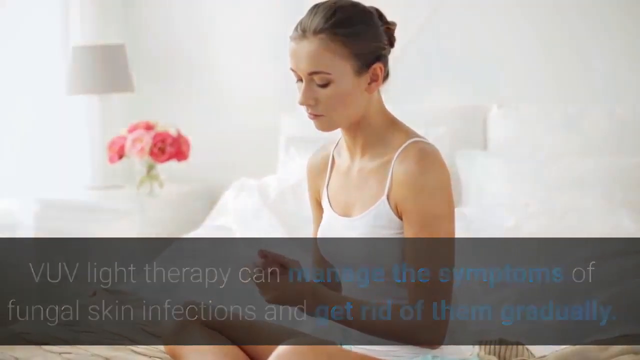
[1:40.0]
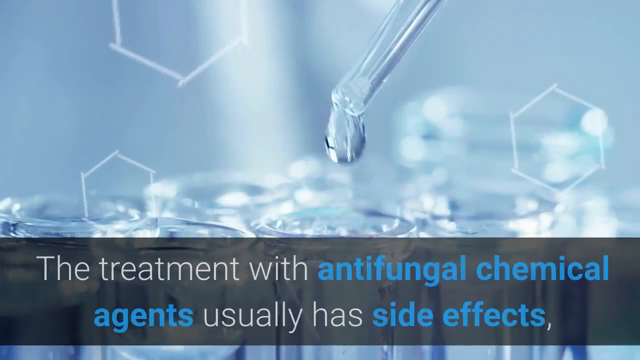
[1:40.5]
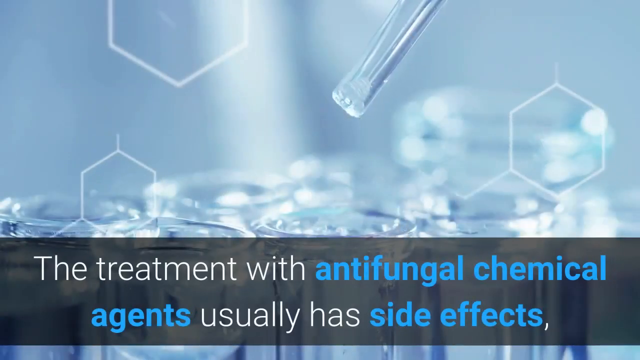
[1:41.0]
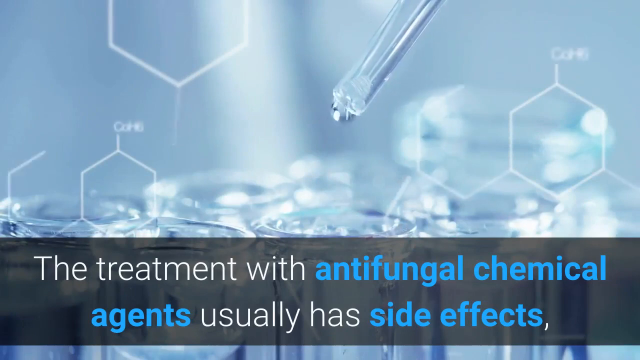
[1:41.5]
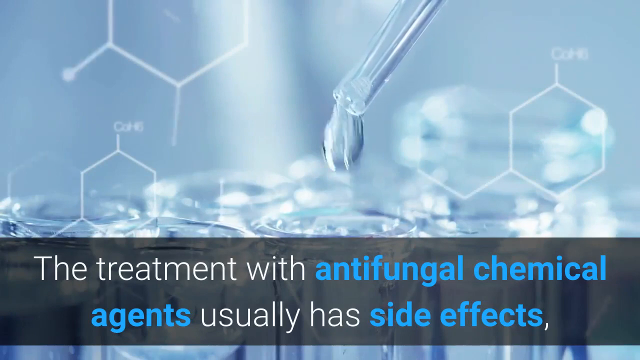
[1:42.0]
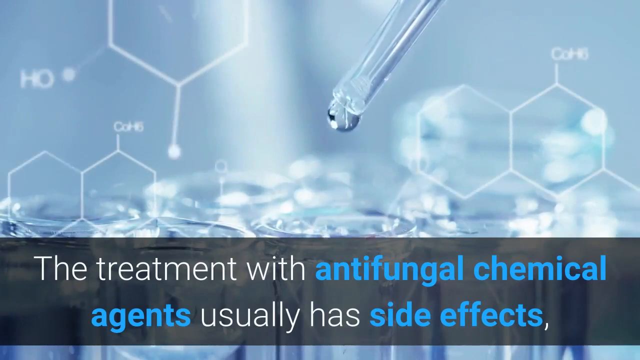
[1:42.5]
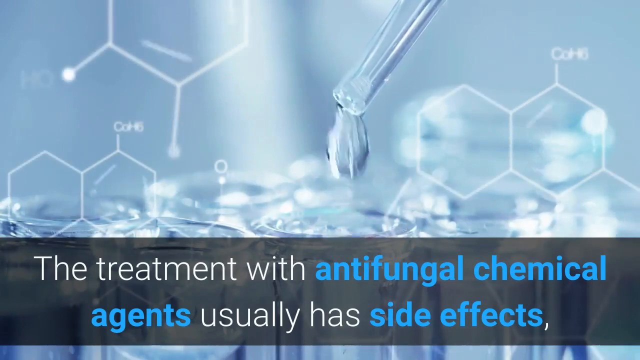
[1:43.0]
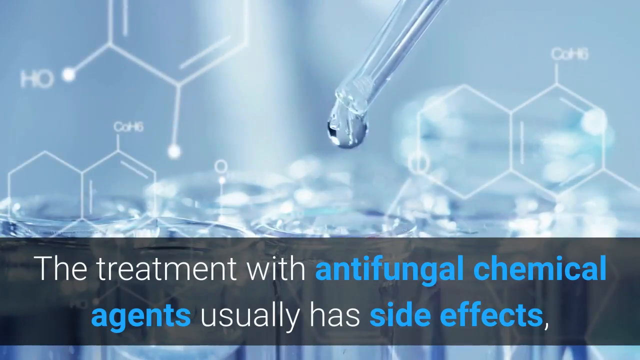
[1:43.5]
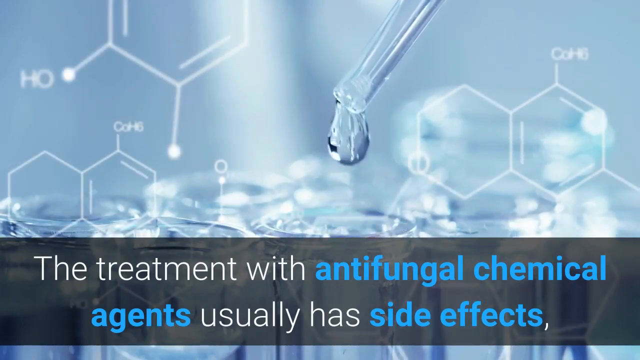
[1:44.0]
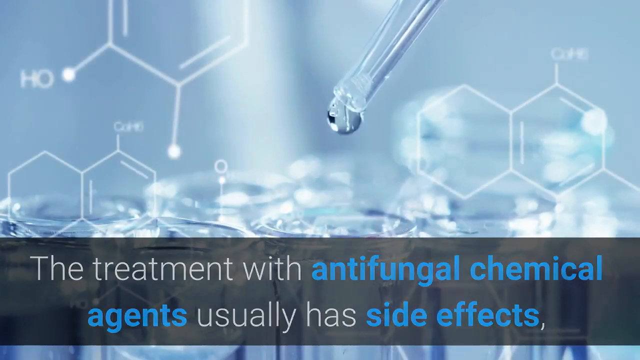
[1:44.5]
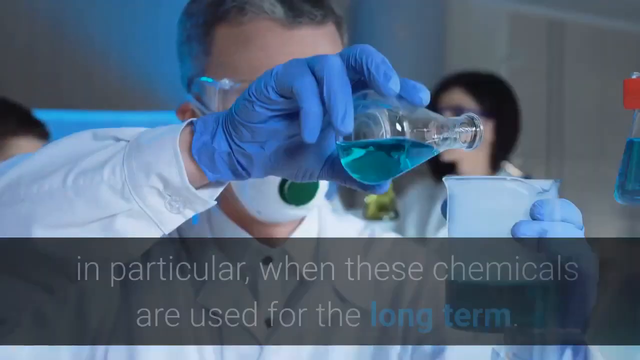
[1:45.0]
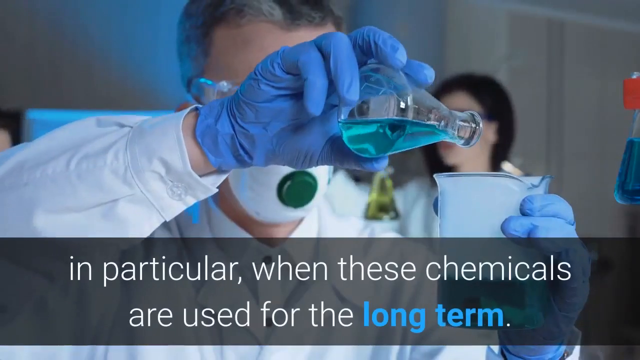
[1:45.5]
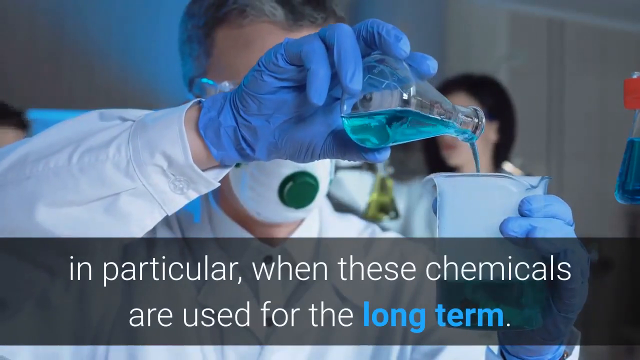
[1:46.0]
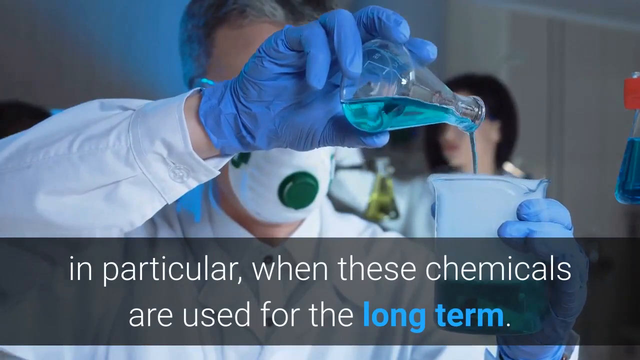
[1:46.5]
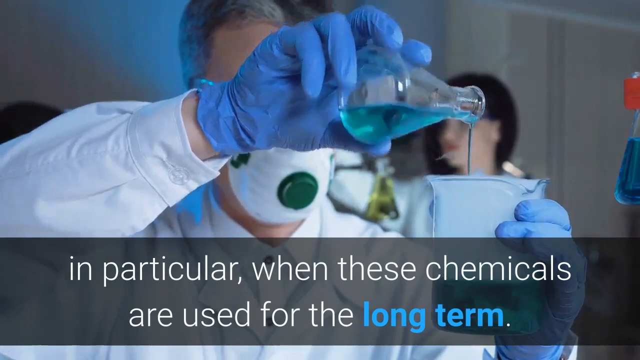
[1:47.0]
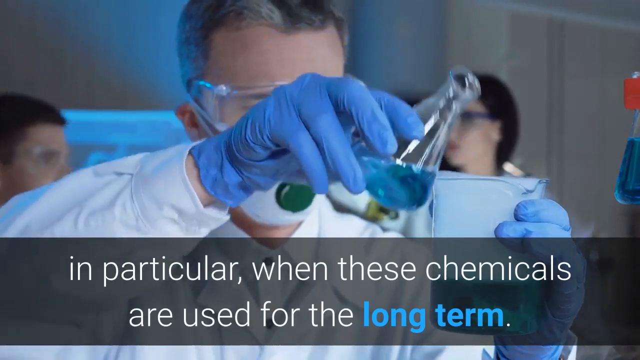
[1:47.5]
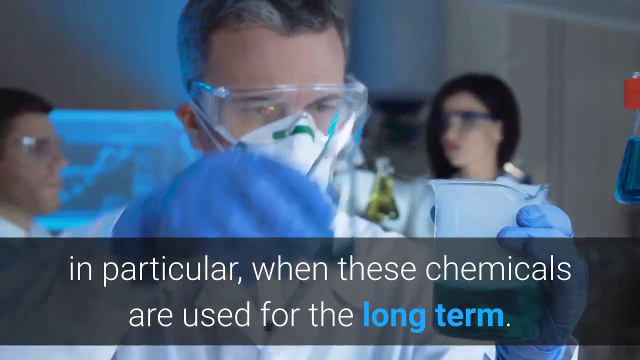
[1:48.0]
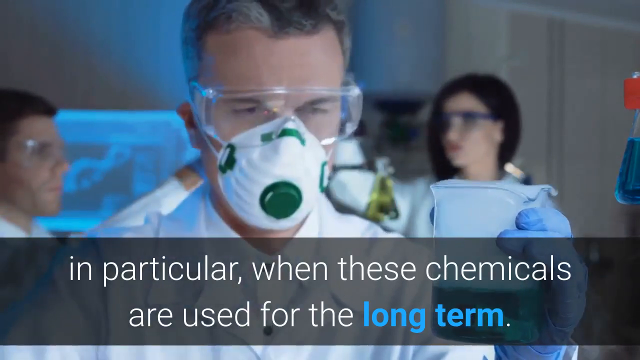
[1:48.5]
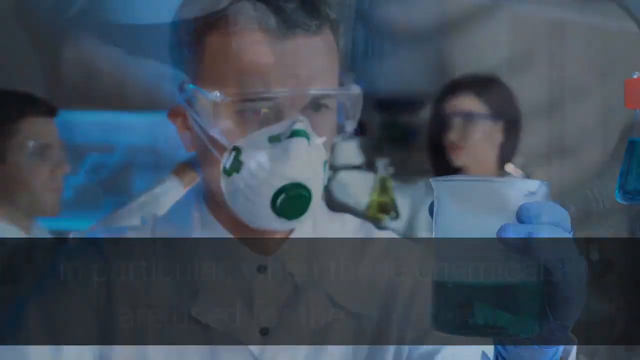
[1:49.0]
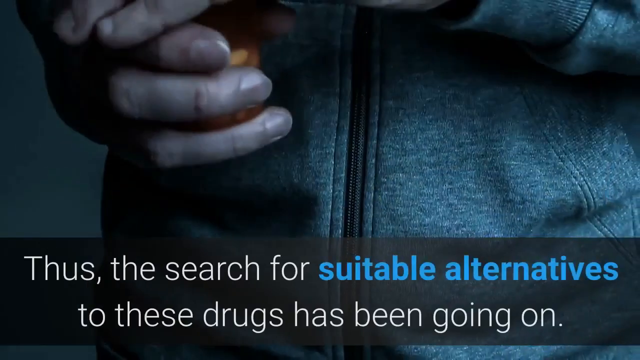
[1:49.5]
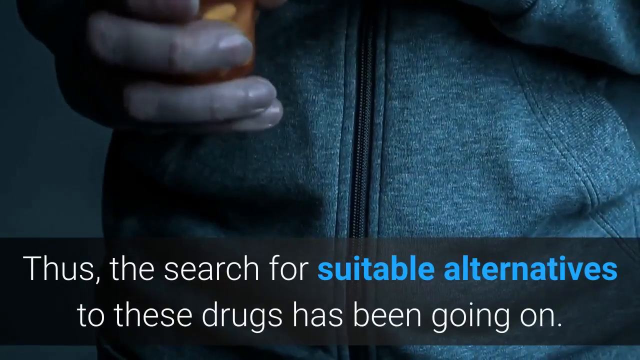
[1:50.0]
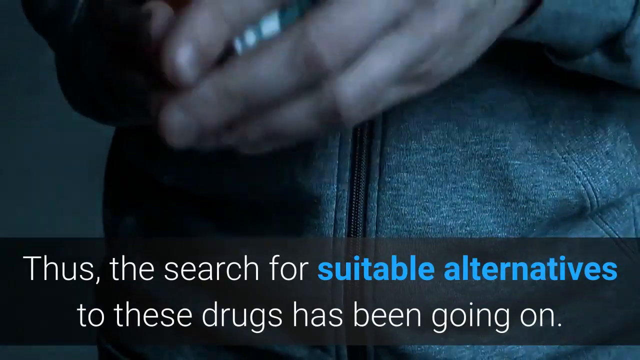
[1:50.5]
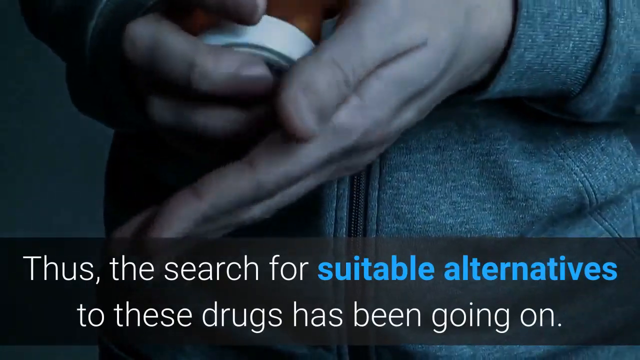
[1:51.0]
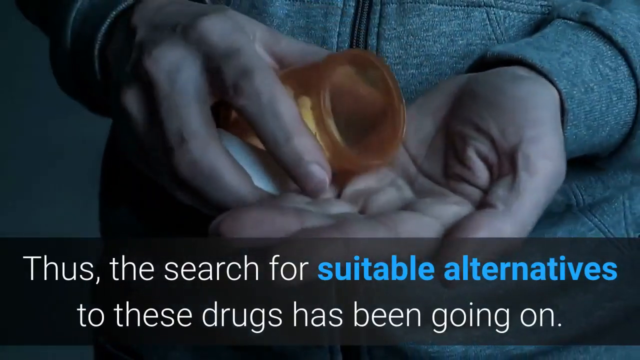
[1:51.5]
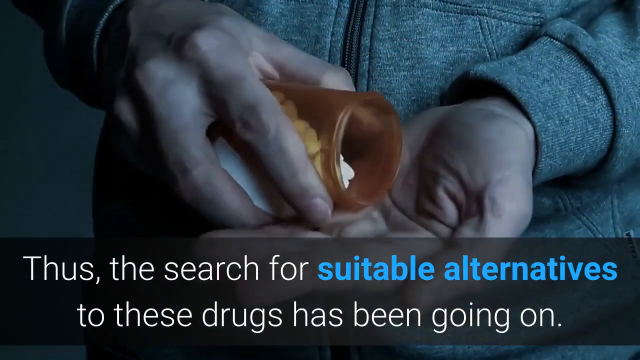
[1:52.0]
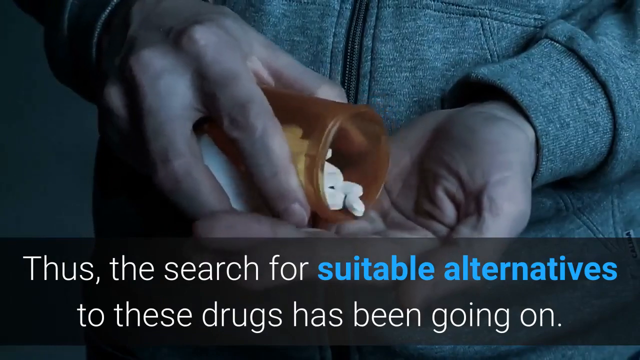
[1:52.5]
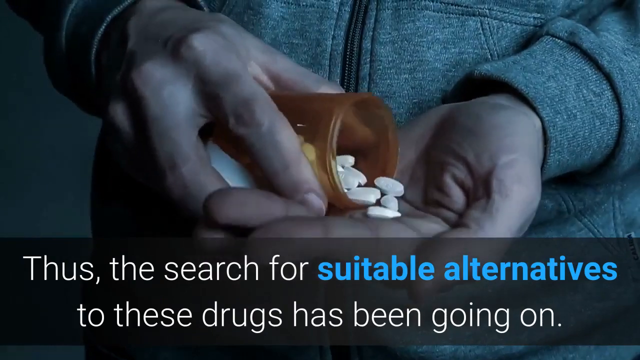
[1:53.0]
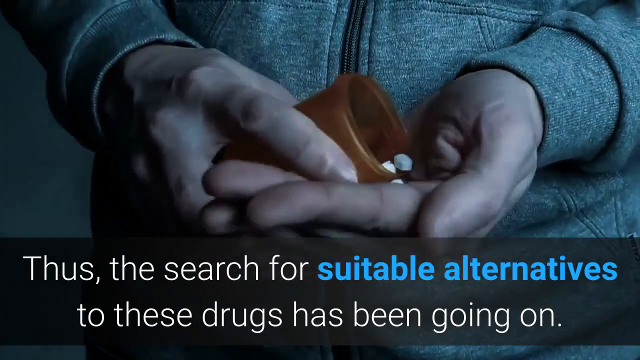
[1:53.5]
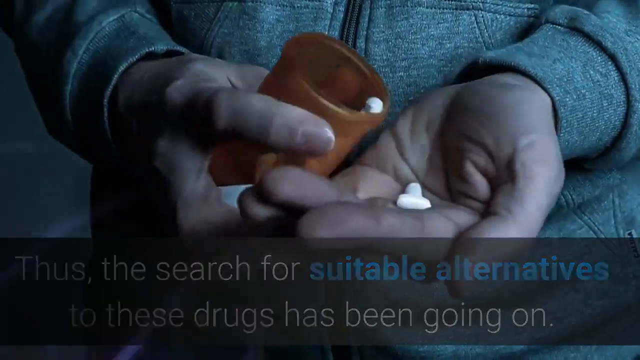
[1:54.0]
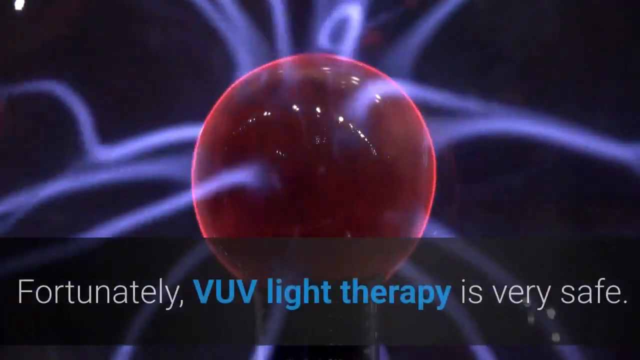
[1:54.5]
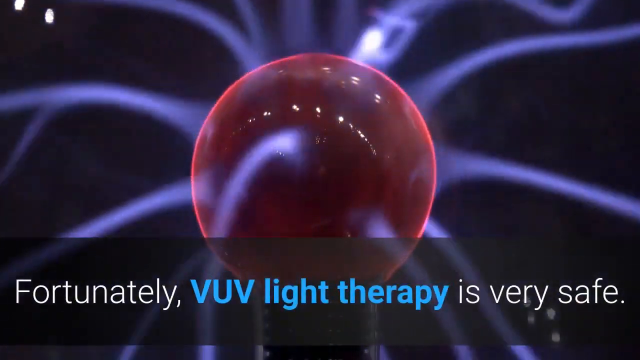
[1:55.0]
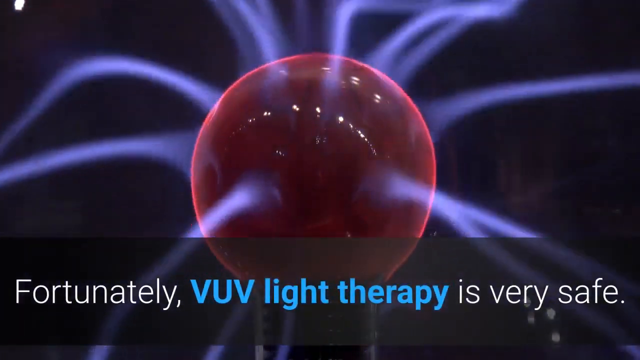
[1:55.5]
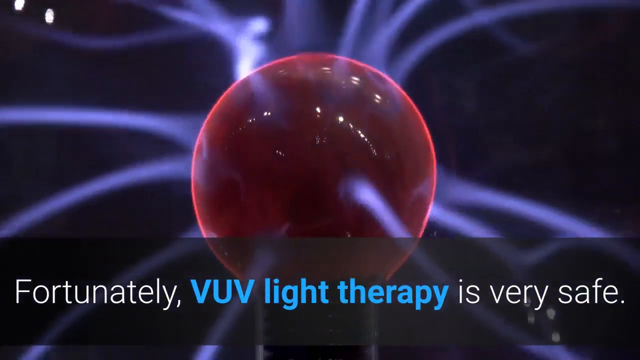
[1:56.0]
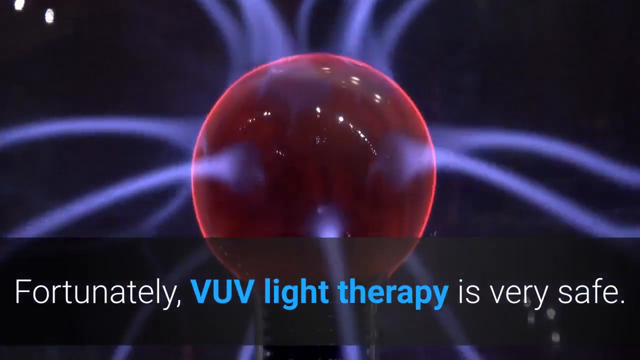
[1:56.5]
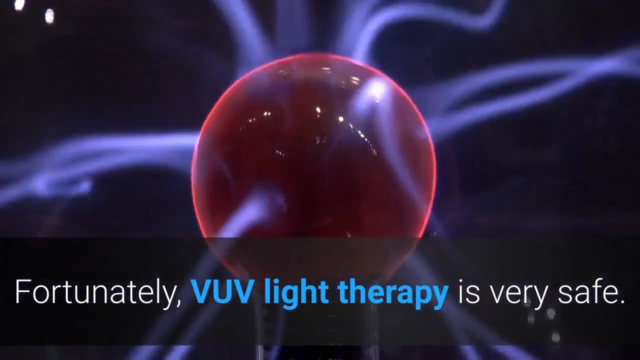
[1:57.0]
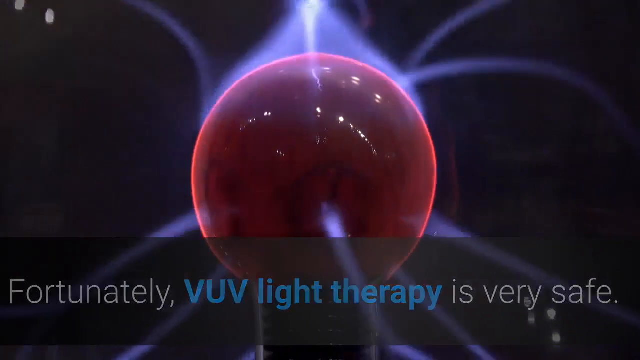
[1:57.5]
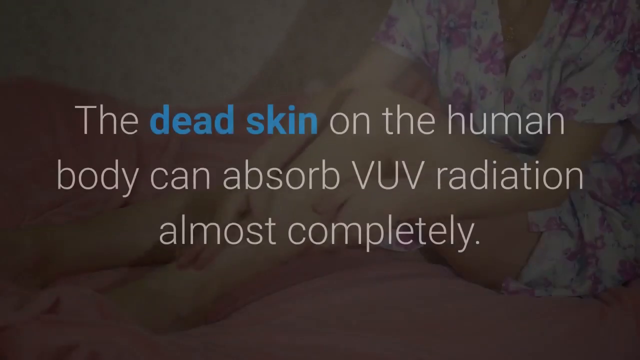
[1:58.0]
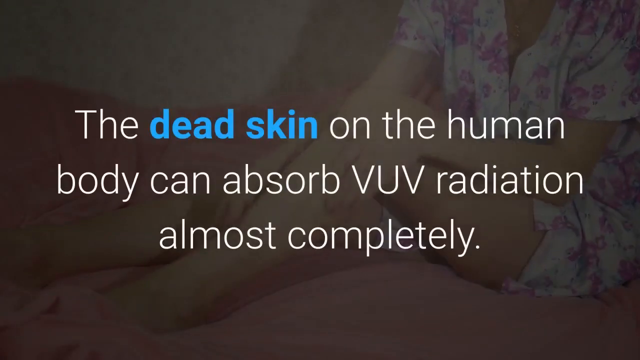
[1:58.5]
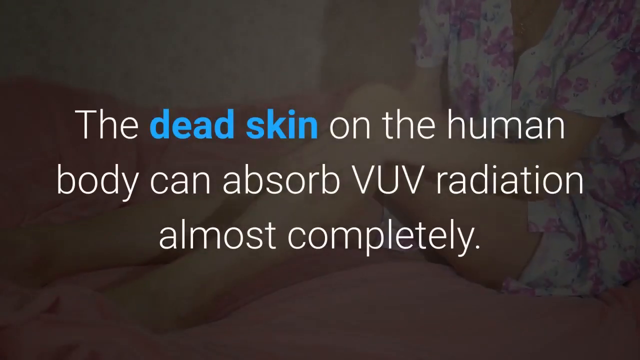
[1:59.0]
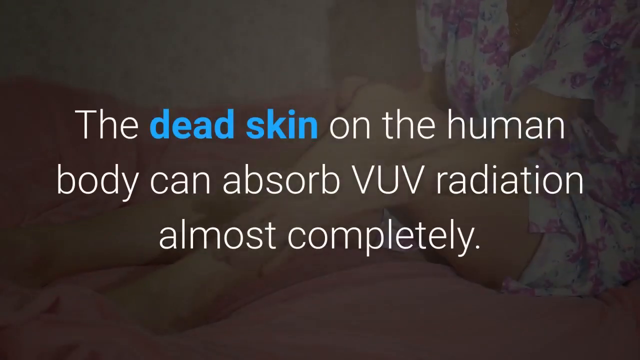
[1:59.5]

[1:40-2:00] The woman sits on the white bed in the white room, her brown hair up in a bun, looking down toward her hands, which she rubs together. A new screen shows a dropper coming from the top of the screen, slightly right of center, releasing a clear liquid that drips onto a surface that looks kind of like glass vials. Three six-sided shapes are around it, and the text at the bottom reads "the treatment with antifungal chemical agents usually has side effects." Molecules appear with letters: "HO" in the upper left corner, "COH5" under that, one labeled simply "O", and one labeled "COH5" at the far right in the upper right corner. Next, a person wearing blue gloves holds a beaker of clear blue fluid in the right hand and a measuring cup in the left gloved hand, pouring the blue liquid into the cup. Behind them is a woman with long dark hair, but the background is blurred. The person pouring has short graying hair and Caucasian skin and wears a long-sleeve button-down collared shirt and a medical respirator mask. The text underneath says "in particular, when these chemicals are used for the long-term", with "long-term" in blue and the rest in white. The man pours half of the liquid in, sets the beaker upright, moves it down out of the frame, and looks at the measuring cup of blue liquid. The screen changes to the waist of a person wearing a zippered hoodie that is gray with white speckles, apparently heathered gray, against a lighter gray background. In their right hand they hold an open orange, clear prescription bottle with white oval or oblong pills, with the cap next to the bottle in the same hand. They pour pills into the palm of their open left hand, accidentally putting three in, then use the bottle to scoop up the third pill, leaving two in the hand. The text underneath says "thus the search for suitable alternatives to these drugs has been going on", with "suitable alternatives" in blue and the rest in white. A new screen then shows a big red globe in the center with bluish streaks coming off it and moving all around on a black background, with the text "unfortunately, VUV light therapy is very safe."